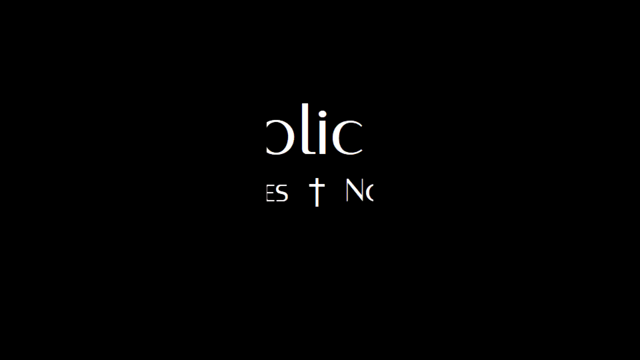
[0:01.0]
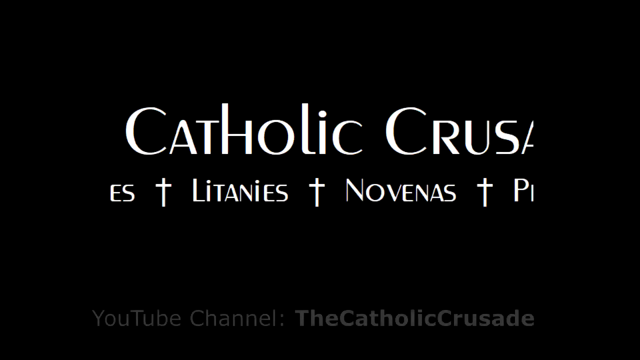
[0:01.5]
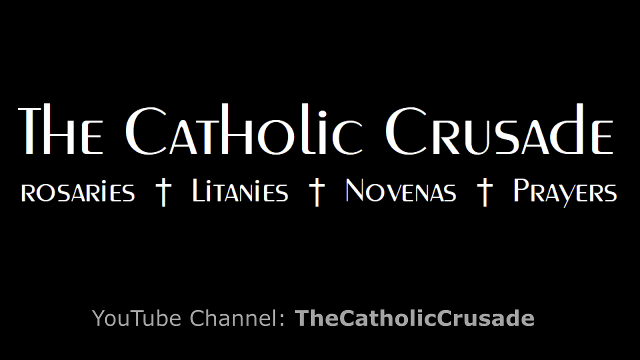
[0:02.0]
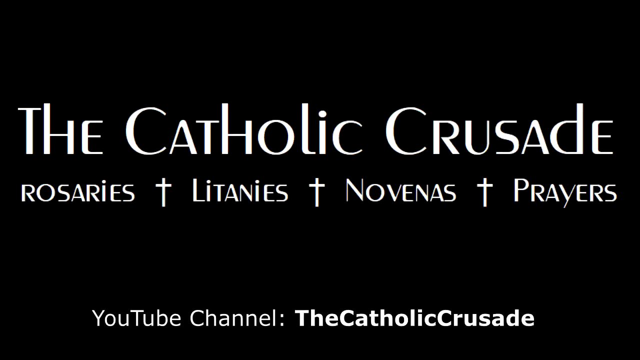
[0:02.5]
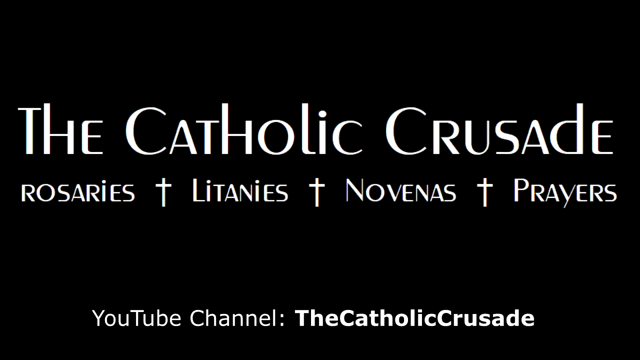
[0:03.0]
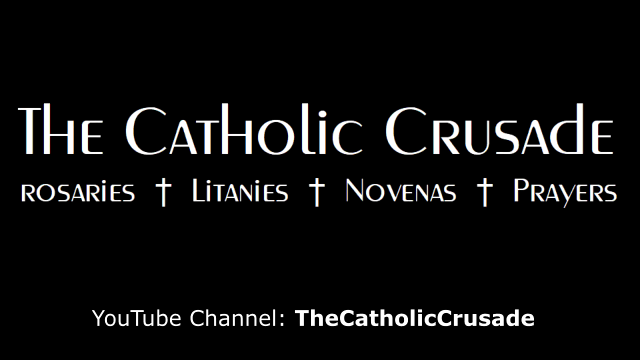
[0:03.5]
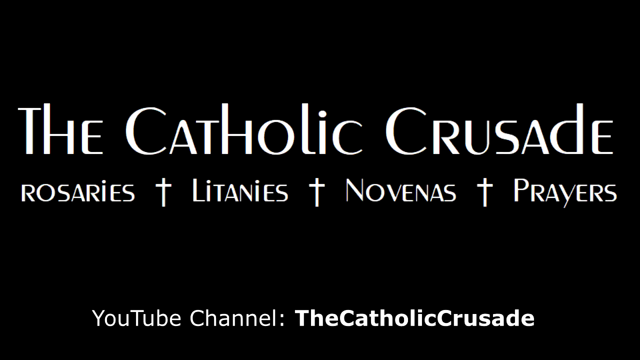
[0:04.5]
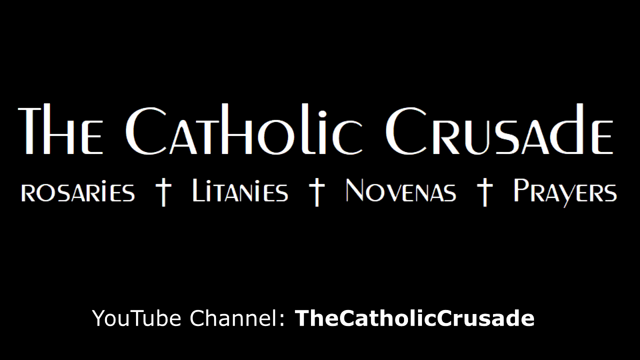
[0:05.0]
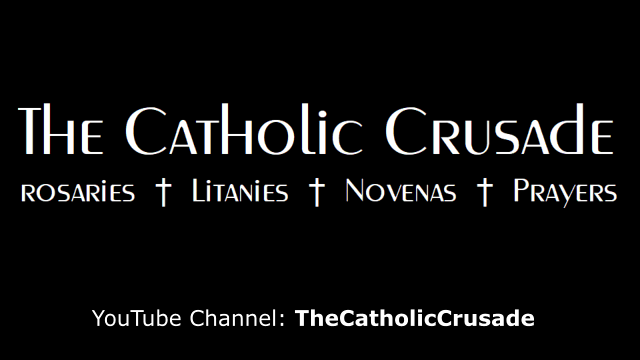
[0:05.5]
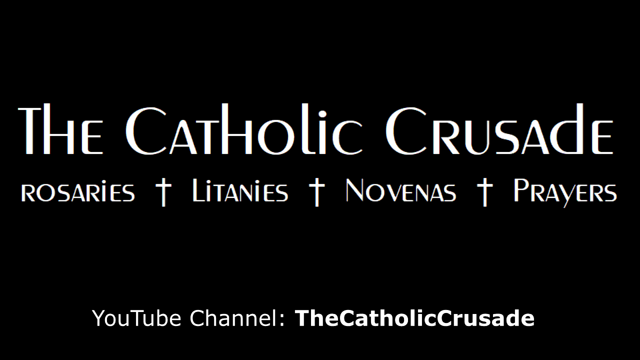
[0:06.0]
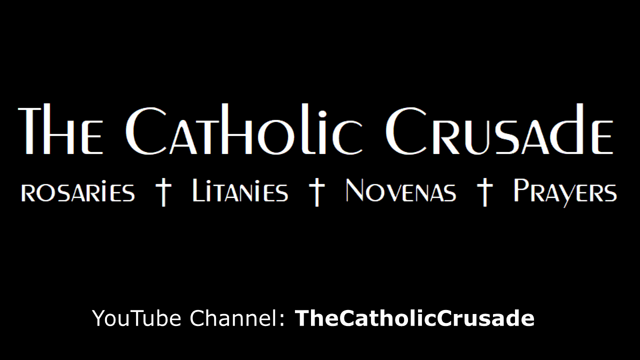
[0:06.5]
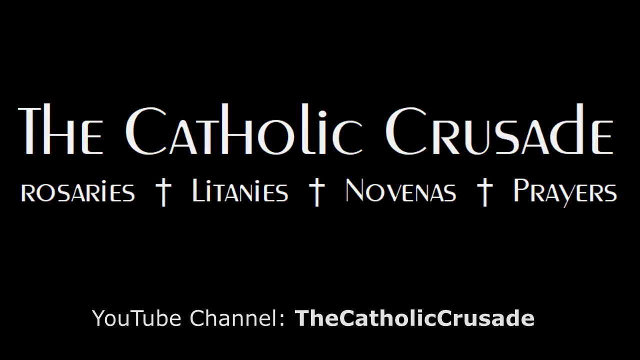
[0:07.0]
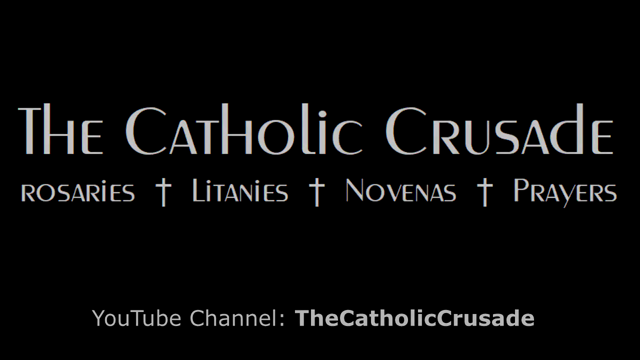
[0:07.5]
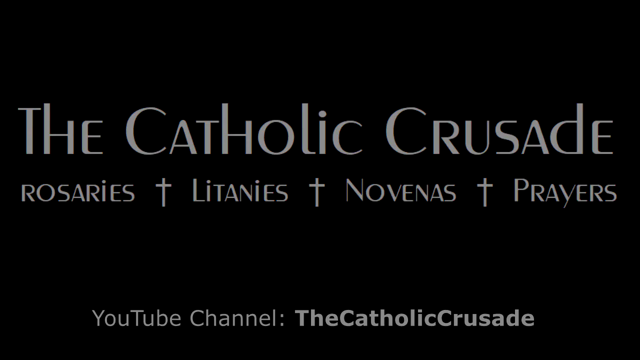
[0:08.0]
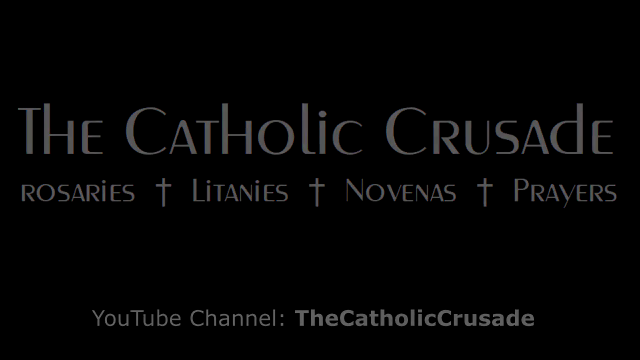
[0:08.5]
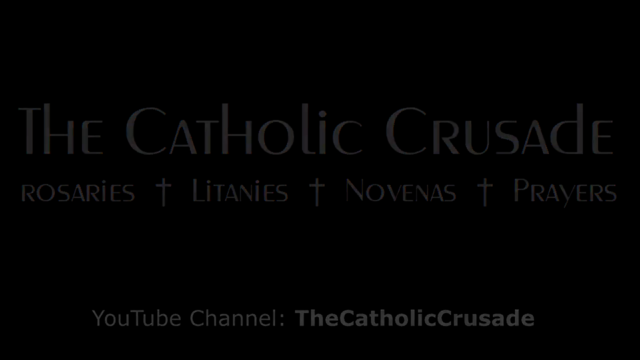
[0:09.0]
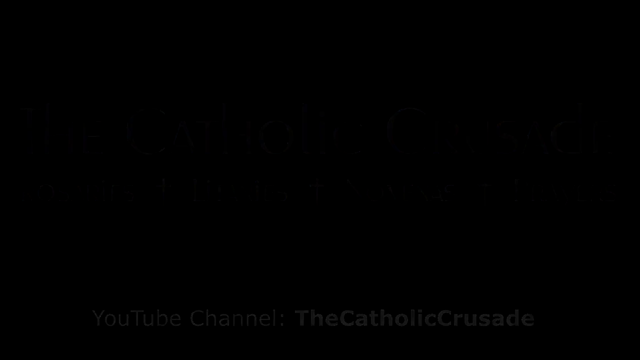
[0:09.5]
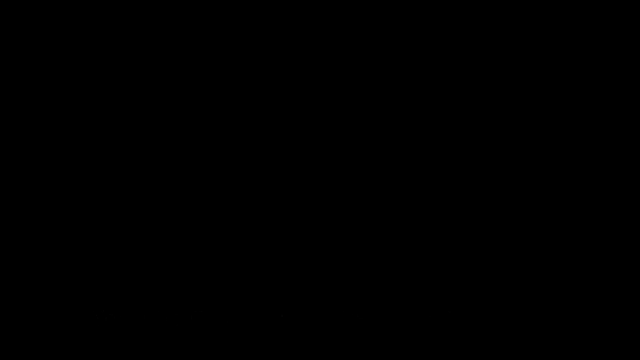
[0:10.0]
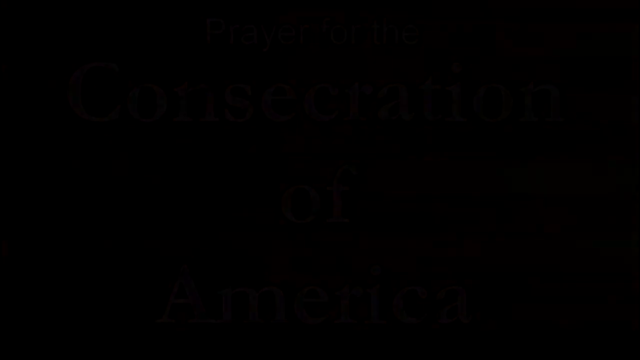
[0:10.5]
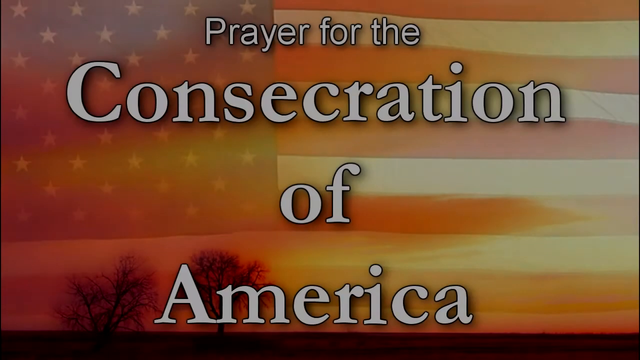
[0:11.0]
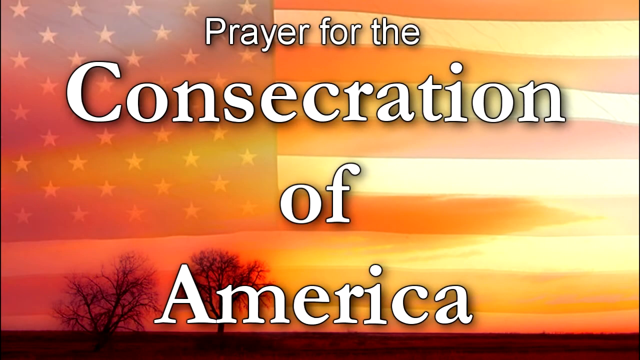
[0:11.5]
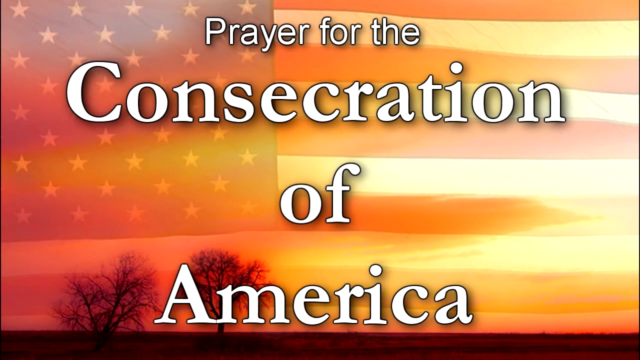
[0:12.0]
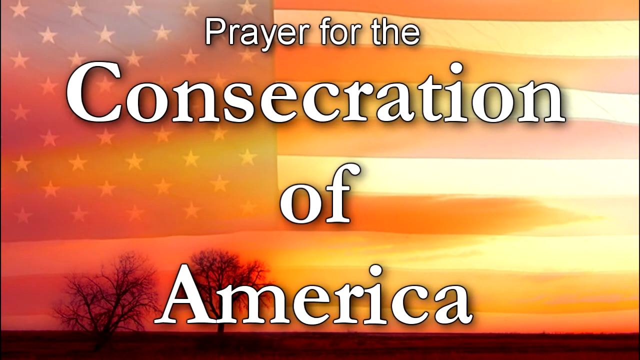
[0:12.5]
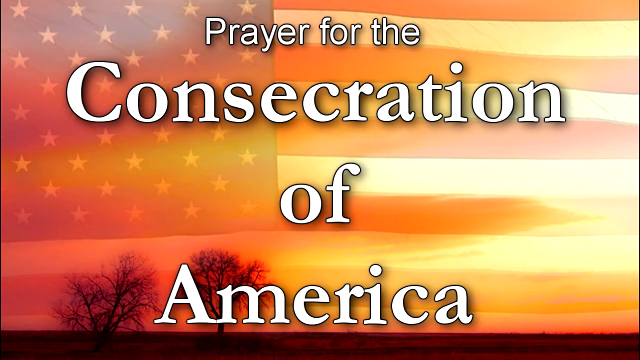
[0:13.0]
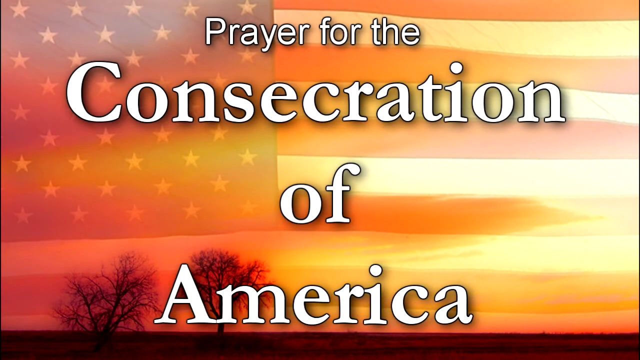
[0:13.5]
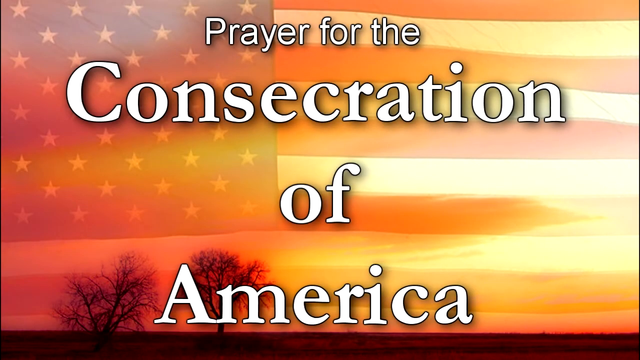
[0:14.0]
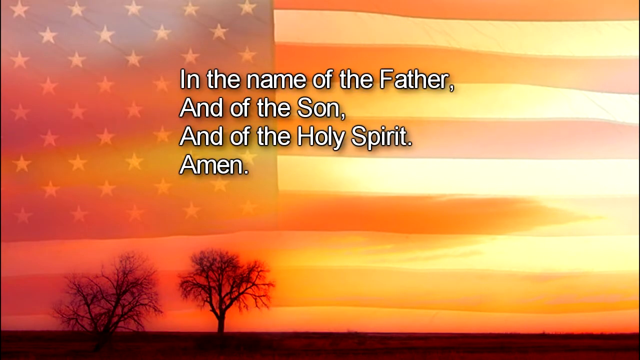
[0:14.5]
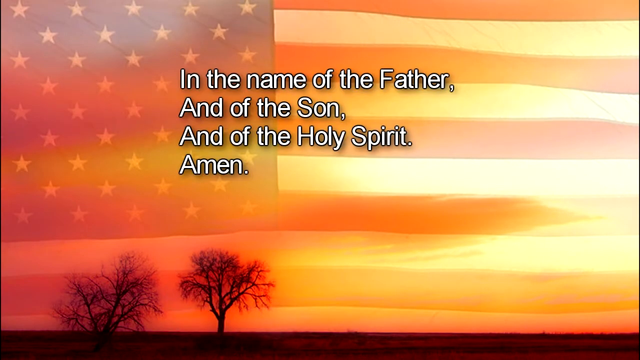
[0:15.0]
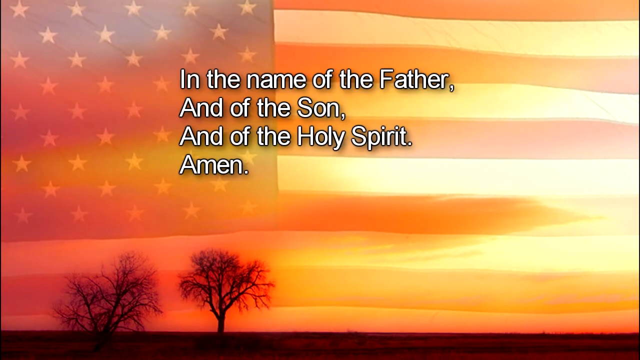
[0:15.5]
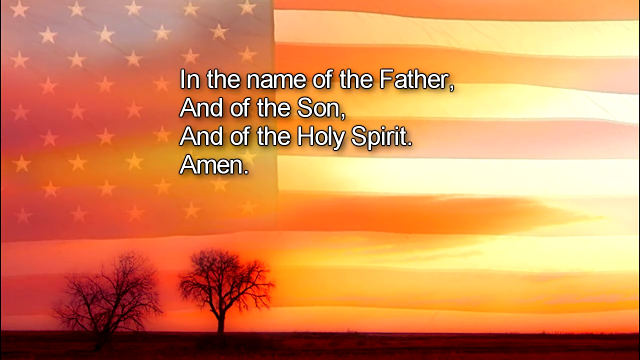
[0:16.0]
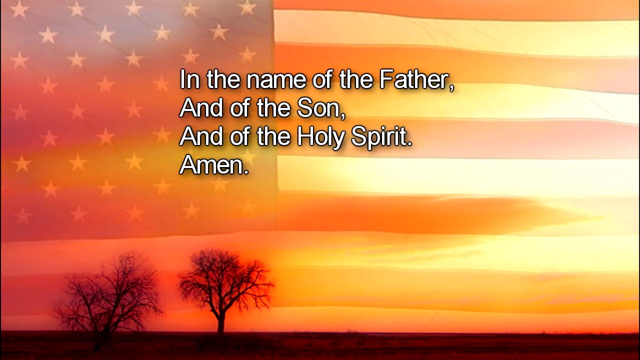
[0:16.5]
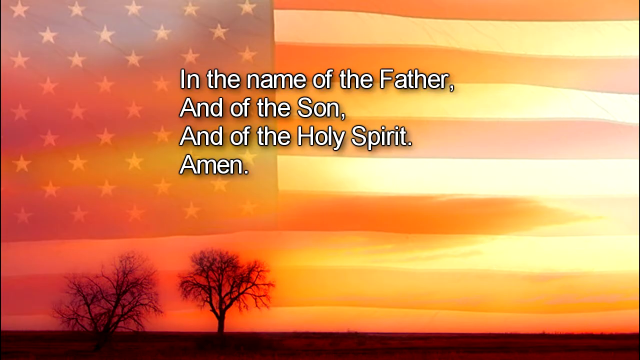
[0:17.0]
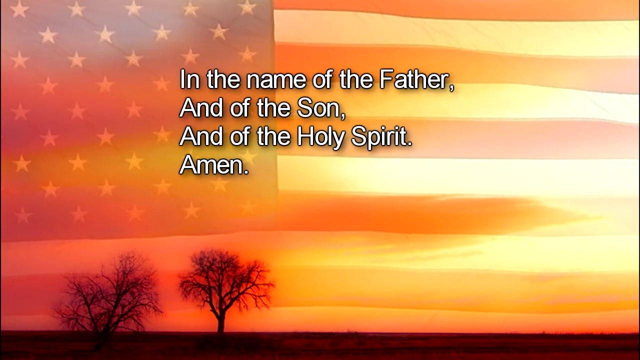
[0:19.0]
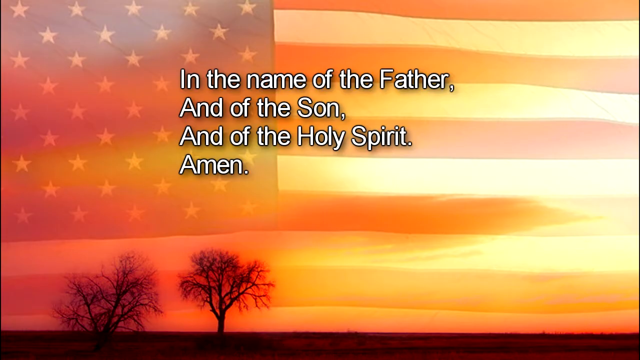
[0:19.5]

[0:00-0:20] A beginning page reads "the Catholic Crusade Rosaries And litanies novenas and prayers" and "The YouTube channel the Catholic Crusade." Later, text reads "prayer for the consecration of America" over an American flag background, with a couple of trees in the lower left-hand corner. The text then reads "in the name of the Father and of the Son and of the Holy Spirit Amen." The next page reads "Immaculate Mary most Holy Mother of God and of our Lord and Savior Jesus Christ We the people of the United States of America at this historic moment Stand before you in a humbled condition of love loyalty affection and thankfulness." The flag has the stars and the blue in its upper left-hand corner, the rest of the image has the red and white stripes, and trees are in the lower left-hand corner.